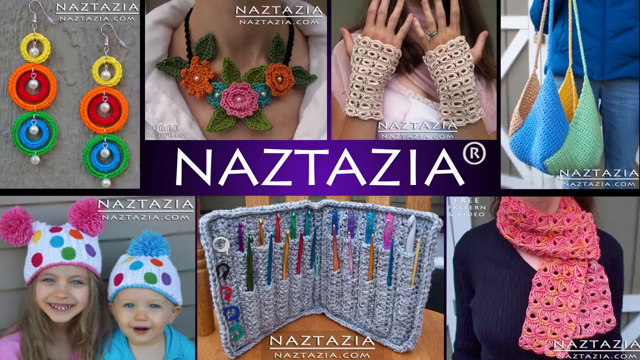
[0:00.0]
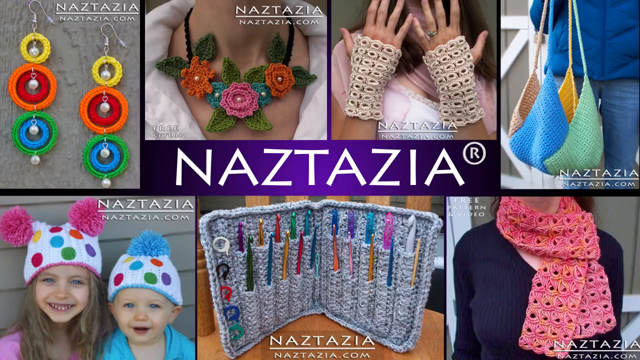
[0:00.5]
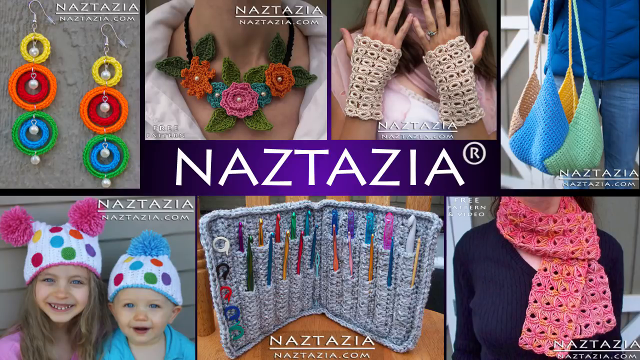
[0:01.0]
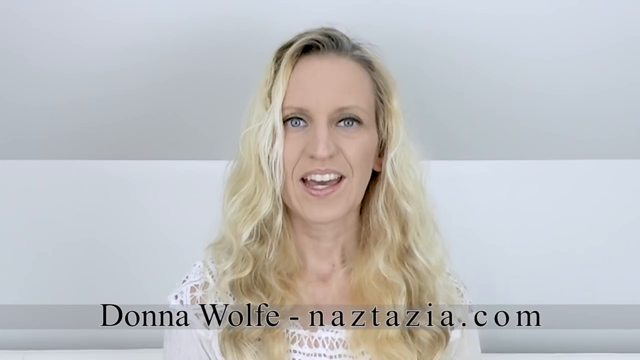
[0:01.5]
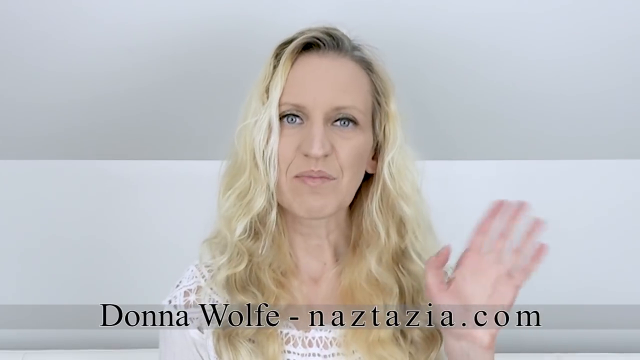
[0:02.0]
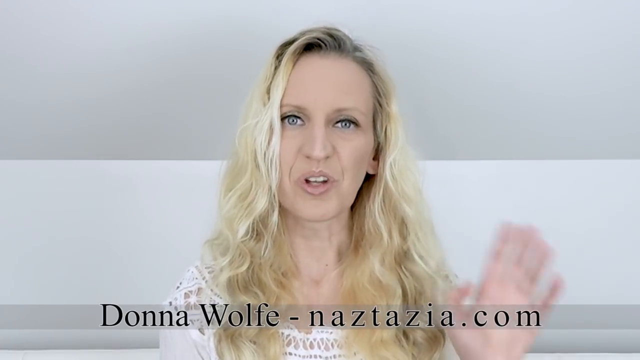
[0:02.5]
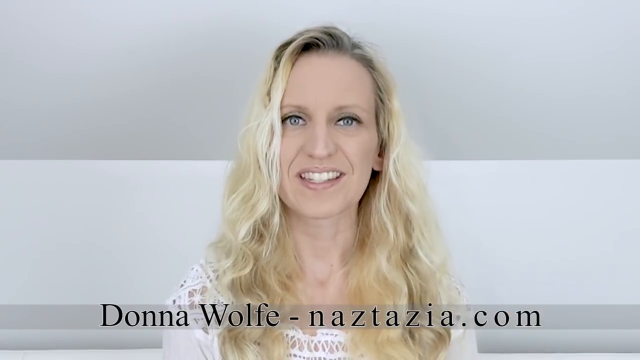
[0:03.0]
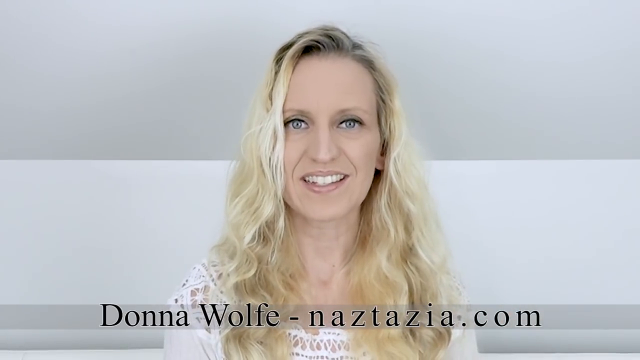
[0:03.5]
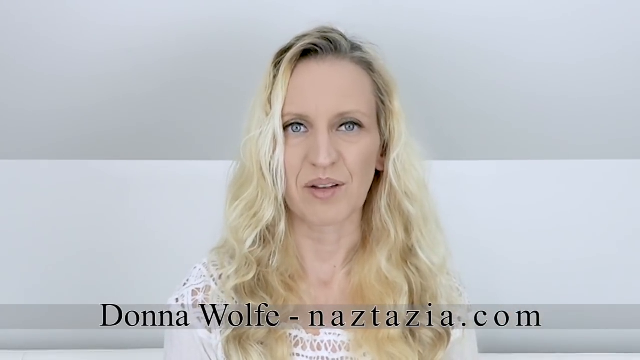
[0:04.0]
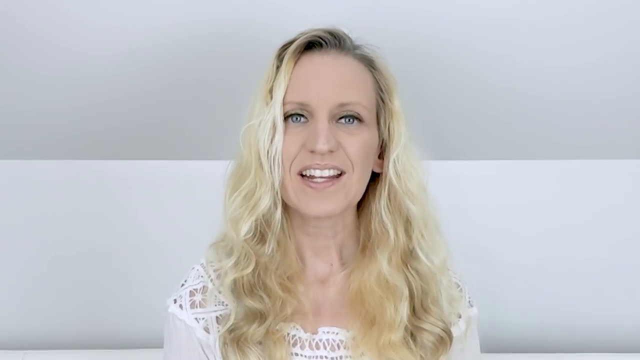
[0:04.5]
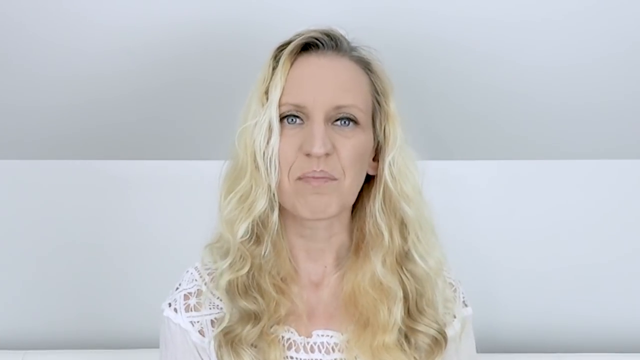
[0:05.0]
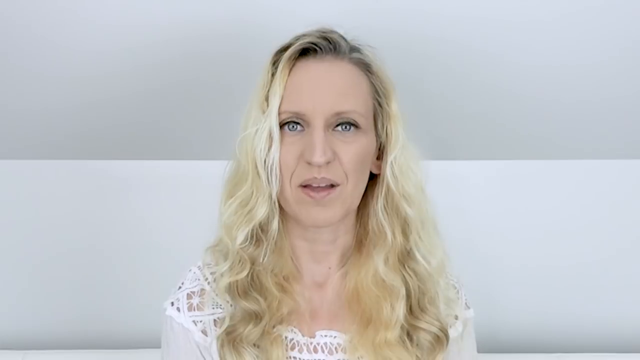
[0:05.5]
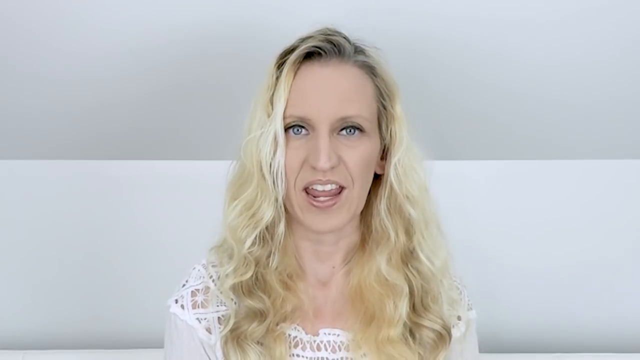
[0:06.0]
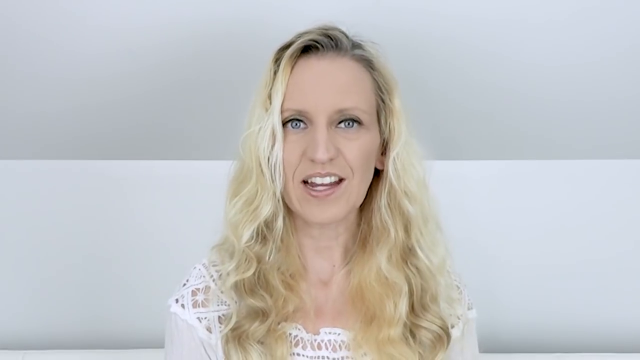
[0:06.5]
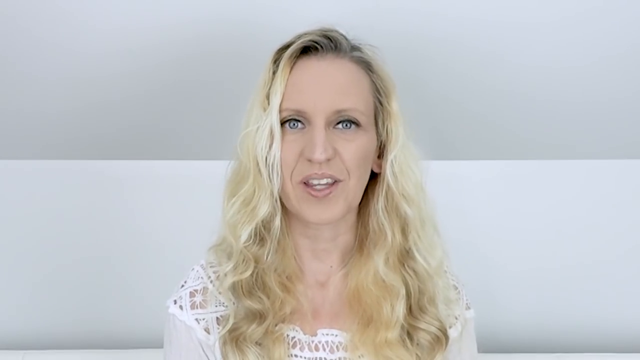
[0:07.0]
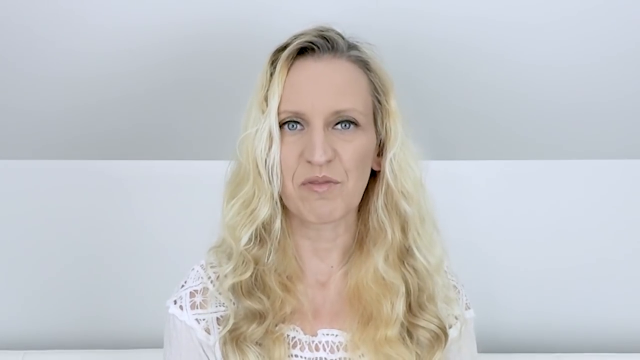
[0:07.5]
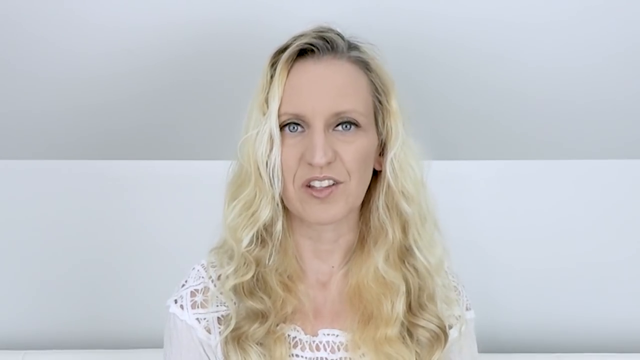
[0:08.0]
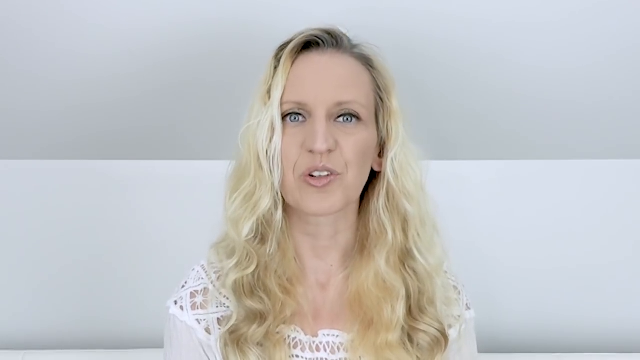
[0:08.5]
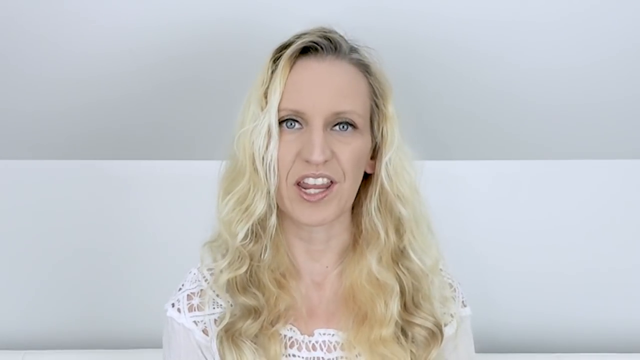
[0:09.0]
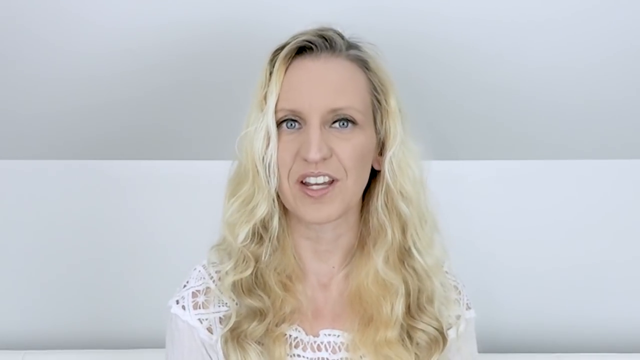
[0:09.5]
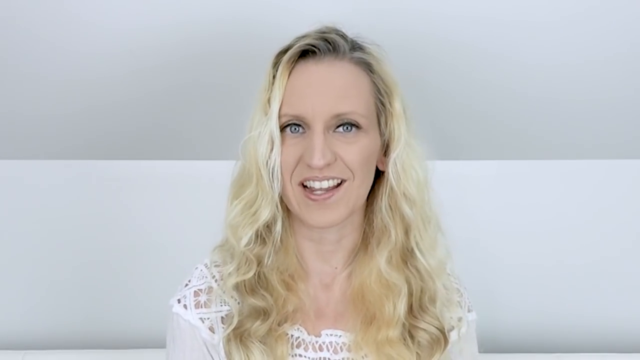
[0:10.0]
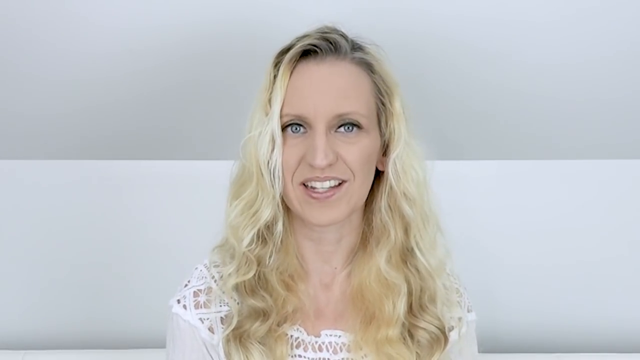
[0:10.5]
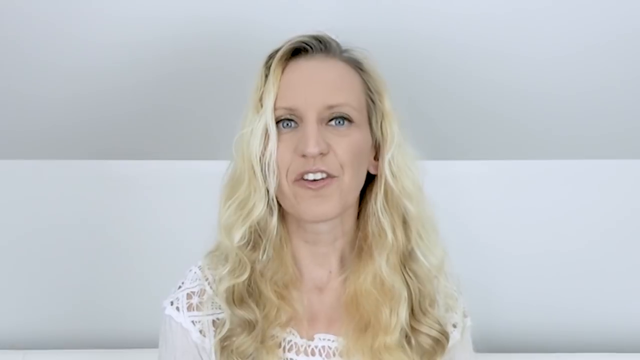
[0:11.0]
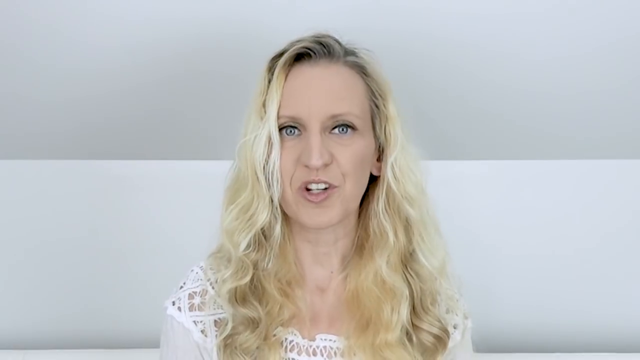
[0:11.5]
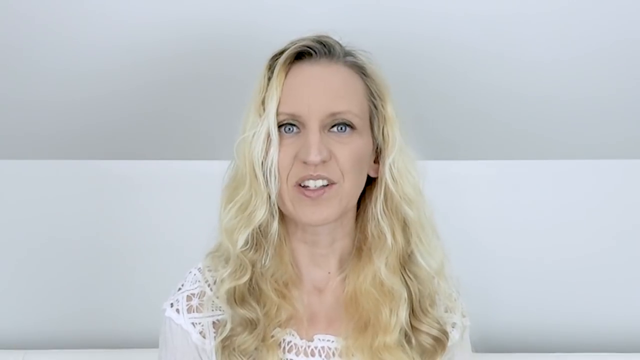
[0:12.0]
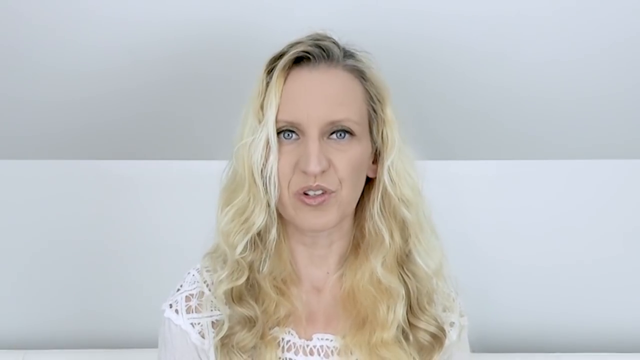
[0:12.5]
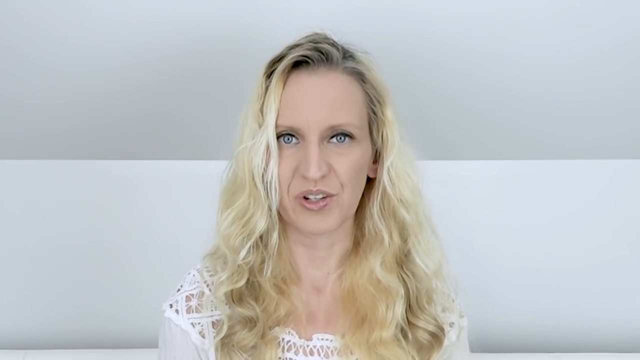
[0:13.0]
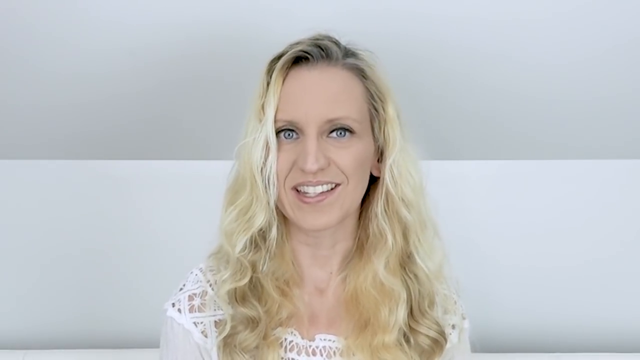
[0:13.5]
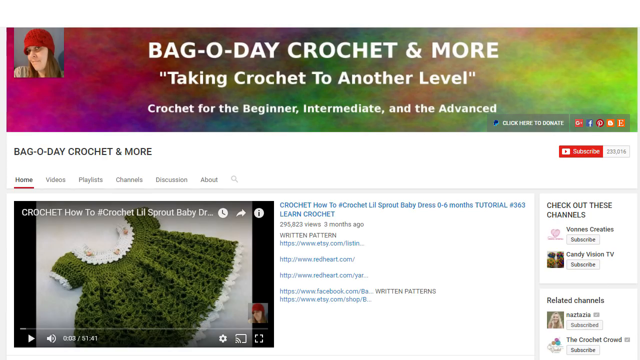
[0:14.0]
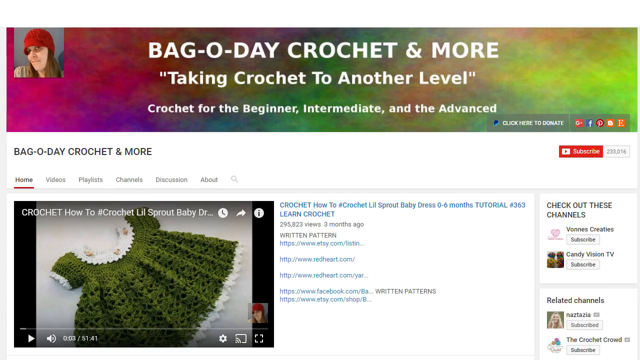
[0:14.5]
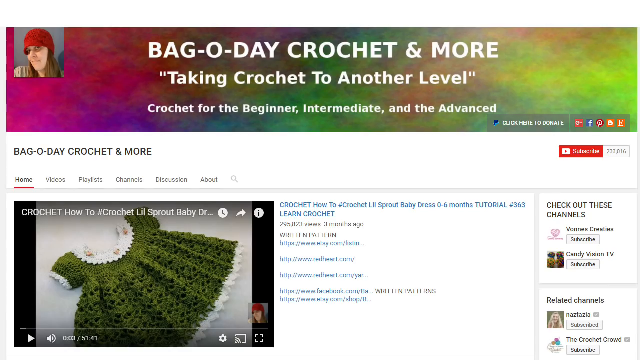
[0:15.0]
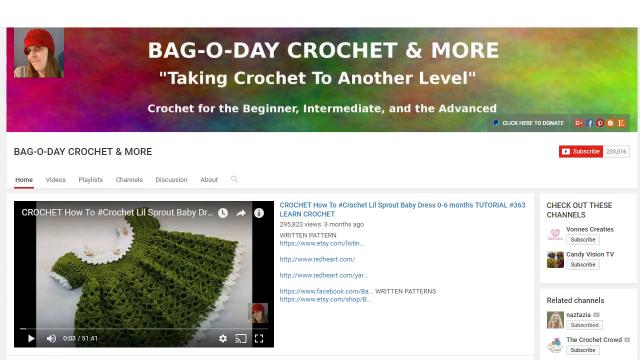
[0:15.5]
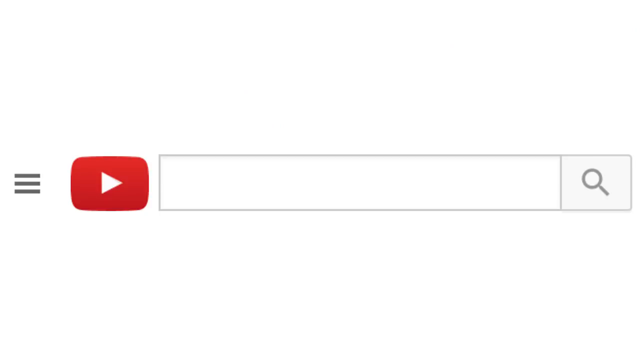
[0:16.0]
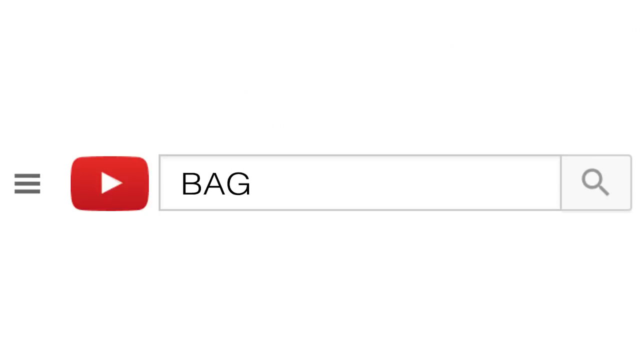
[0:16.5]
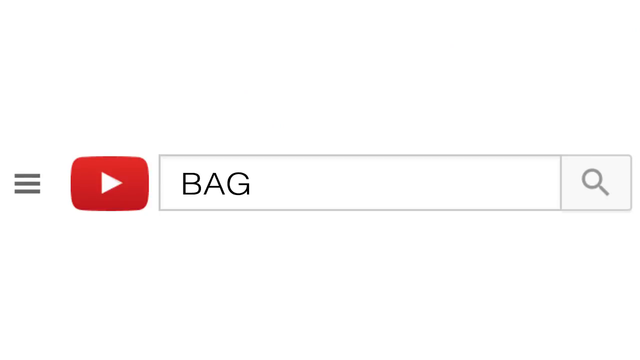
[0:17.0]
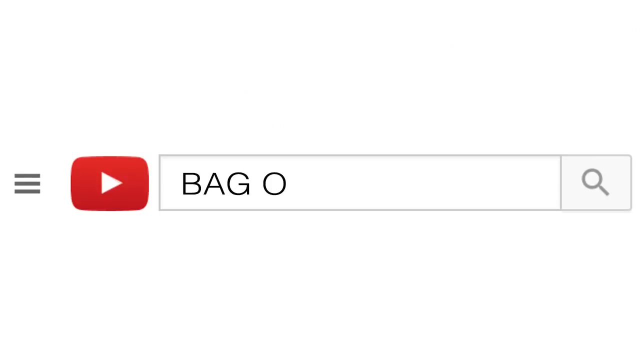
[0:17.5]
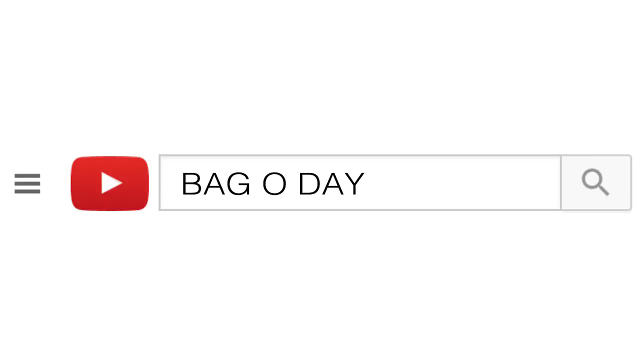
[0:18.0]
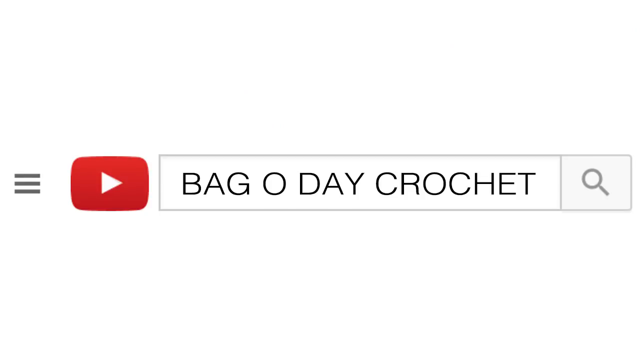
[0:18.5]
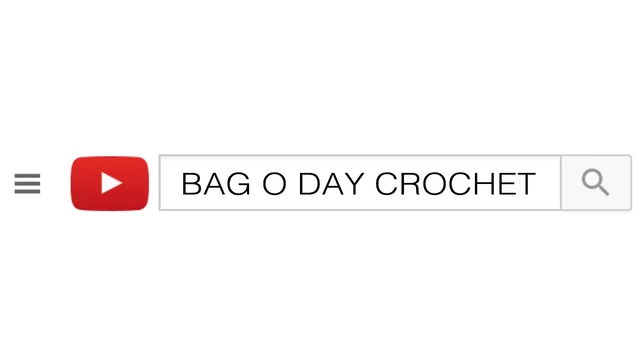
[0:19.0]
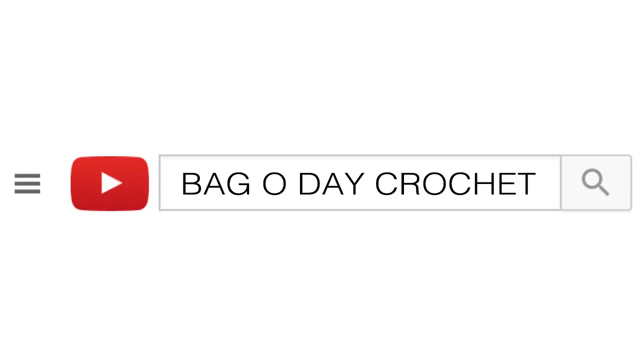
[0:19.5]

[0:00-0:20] The video opens on a screen that seems to be for homemade crocheted accessories, showing earrings, a large flowery necklace, some fingerless gloves, a bag, two children wearing bobble hats, a crochet hook sleeve and a scarf. In the centre of the screen it says "Naztazia", and each photograph is labelled "naztazia" and "naztazia.com". Next, a woman with long blonde hair appears in front of a white background, with the caption "Donna Wolf Naztazia.com". She waves to the camera and then talks directly to it, looking happy and smiling a little. The next screen shows a pattern for a crochet dress, the "Lil Sprout Baby Dress 0-6 month" tutorial; the dress is green and kind of flouncy, with a white collar and white ruffles. At the top of the screen is a rainbow-coloured background, in the top left of which is a brown-haired woman wearing a crochet hat, and the title reads "Bag O'Day Crochet and More Taking Crochet to Another Level. Crochet for the Beginner, Intermediate and the Advanced." The next screen shows a YouTube search bar, with a YouTube logo, and the words "Bag O'Day Crochet" appear one by one in the search field.